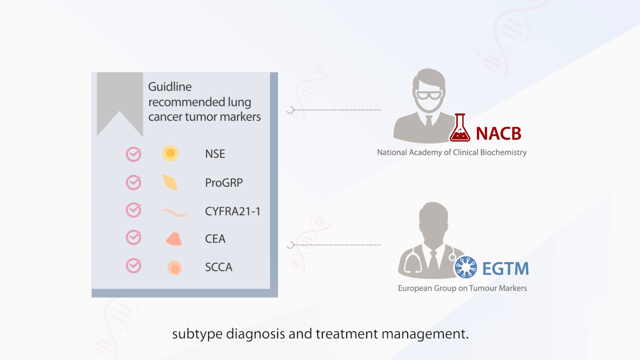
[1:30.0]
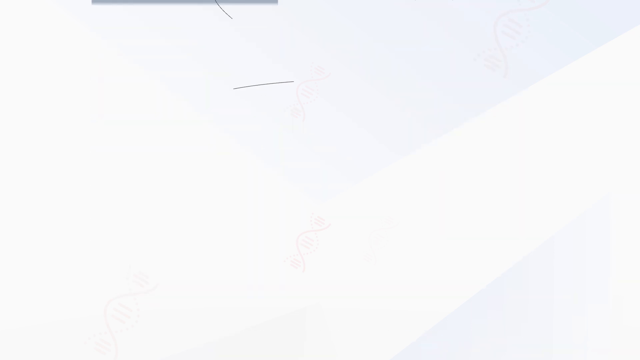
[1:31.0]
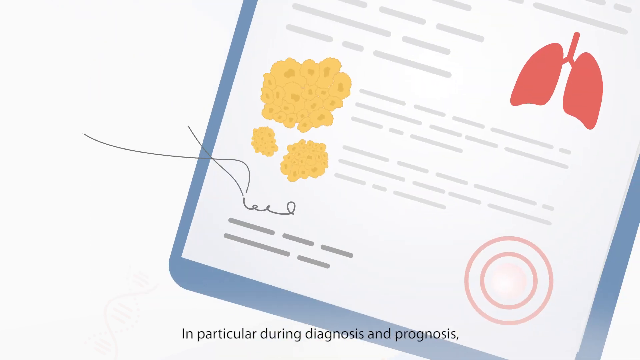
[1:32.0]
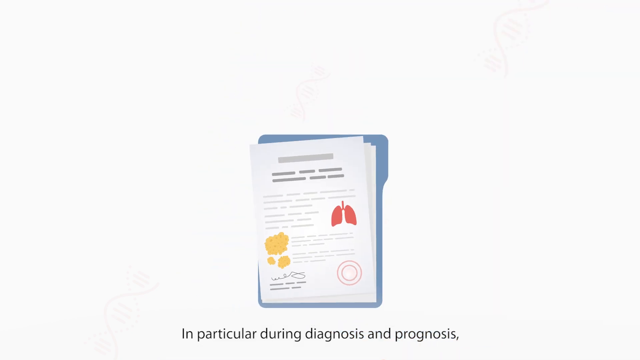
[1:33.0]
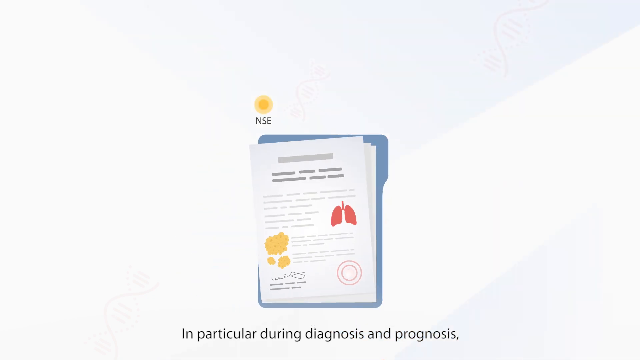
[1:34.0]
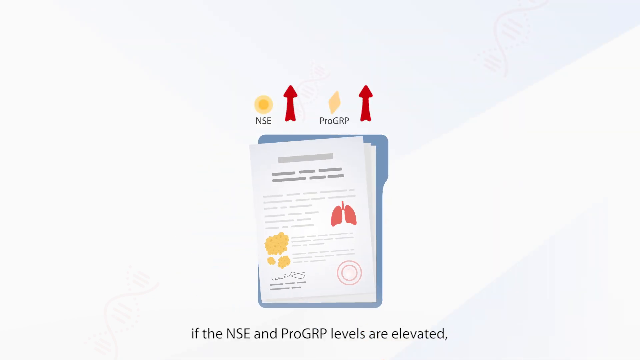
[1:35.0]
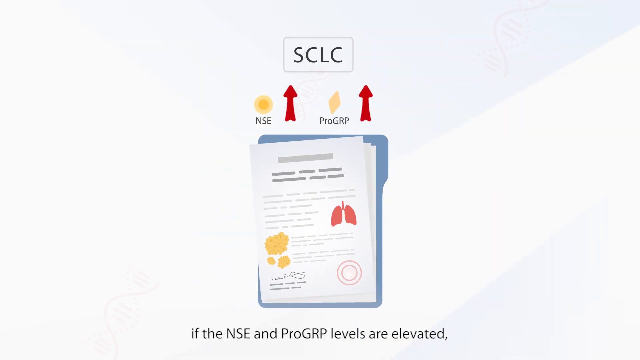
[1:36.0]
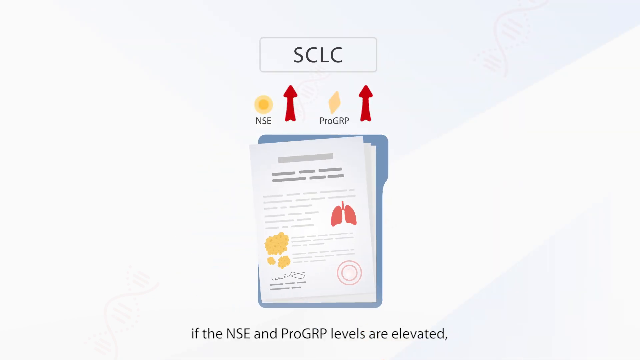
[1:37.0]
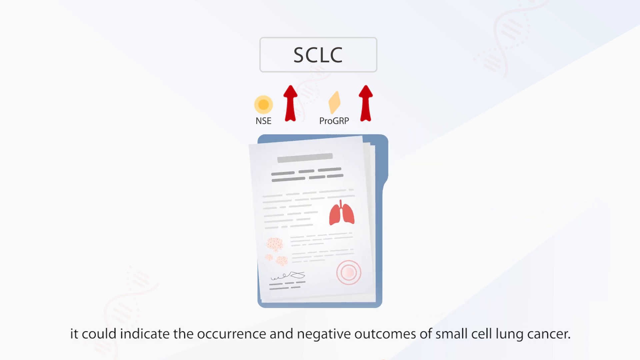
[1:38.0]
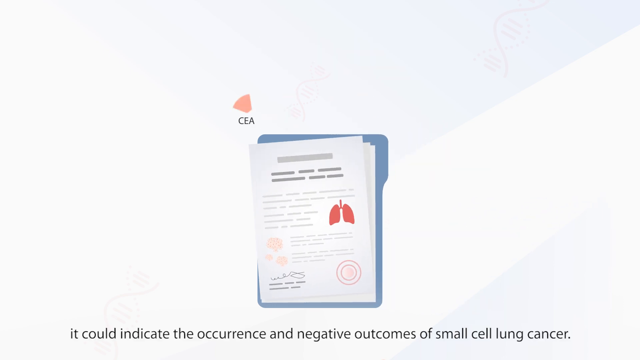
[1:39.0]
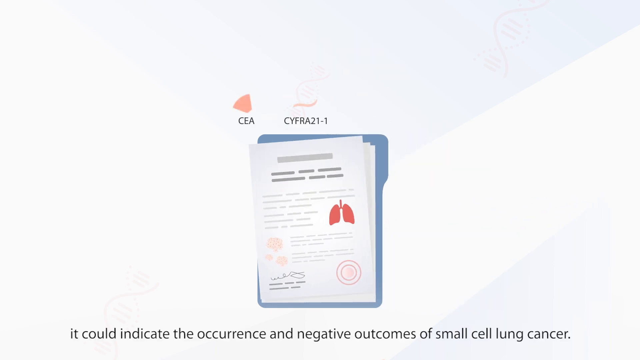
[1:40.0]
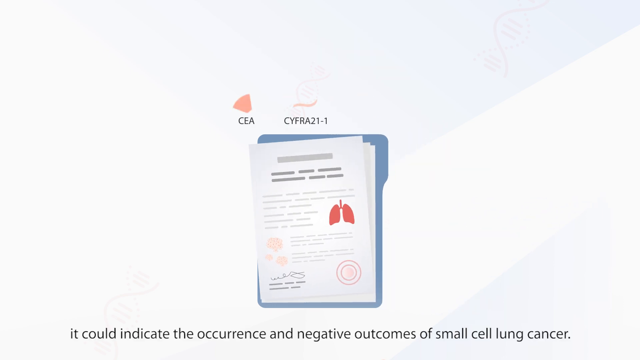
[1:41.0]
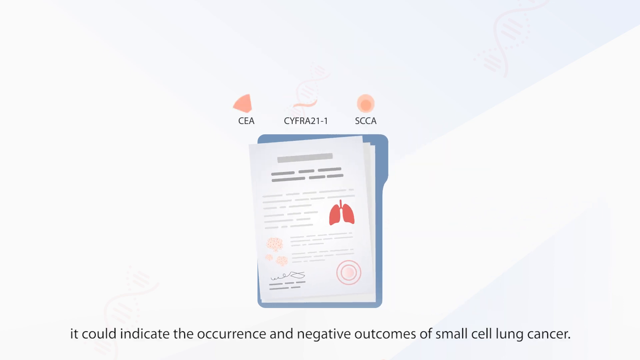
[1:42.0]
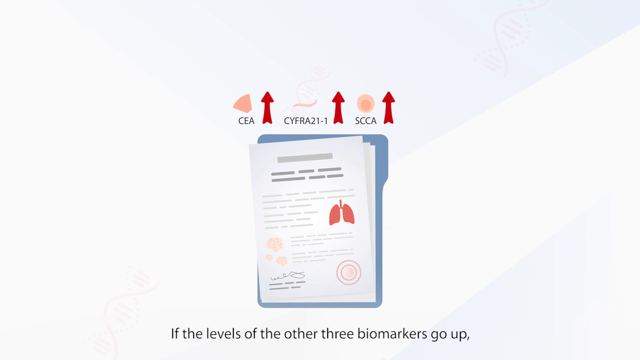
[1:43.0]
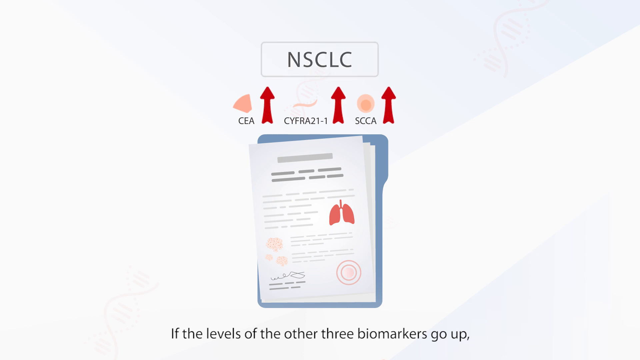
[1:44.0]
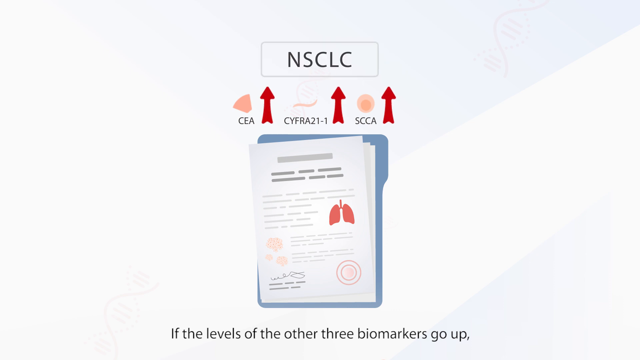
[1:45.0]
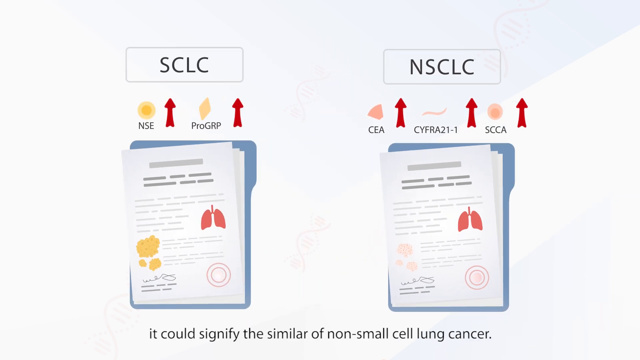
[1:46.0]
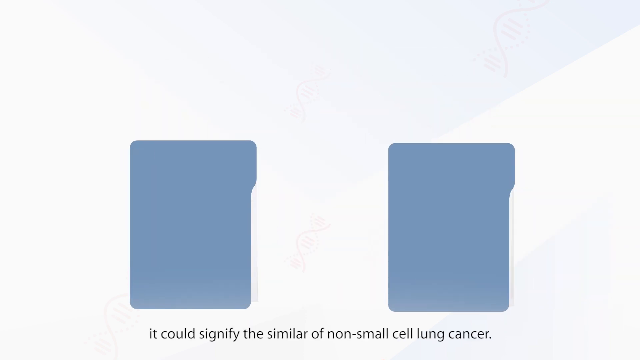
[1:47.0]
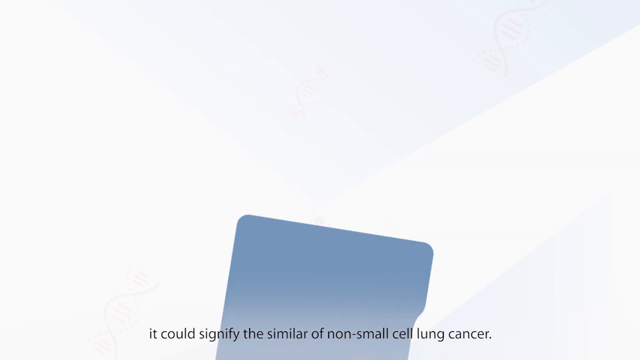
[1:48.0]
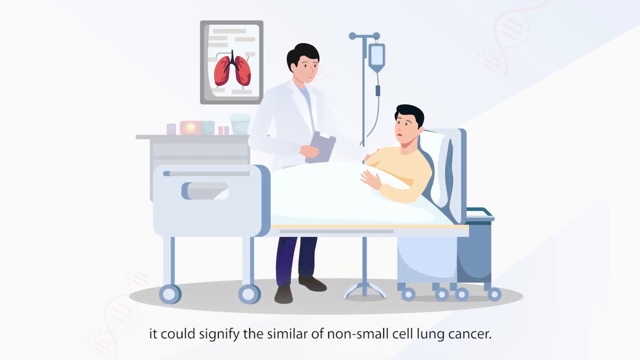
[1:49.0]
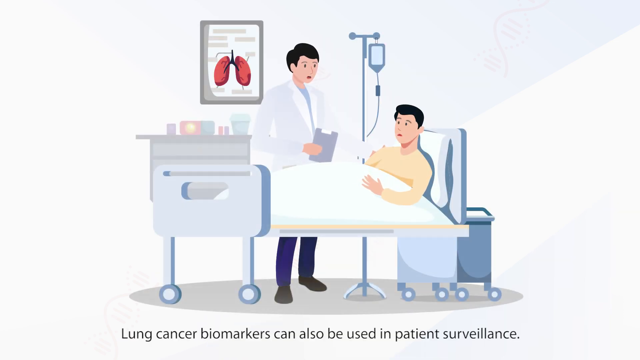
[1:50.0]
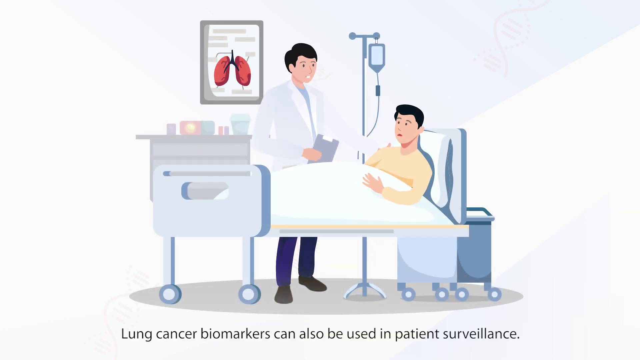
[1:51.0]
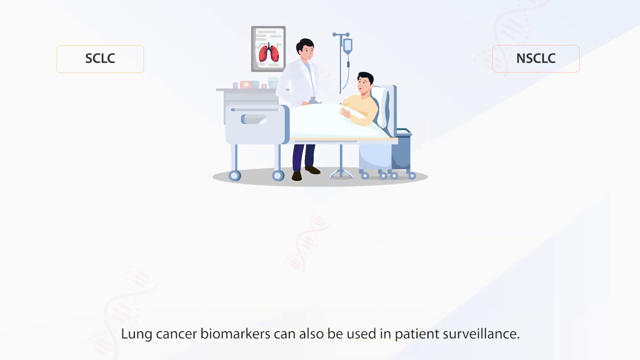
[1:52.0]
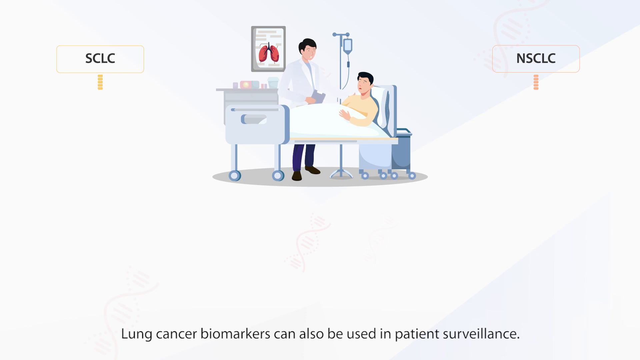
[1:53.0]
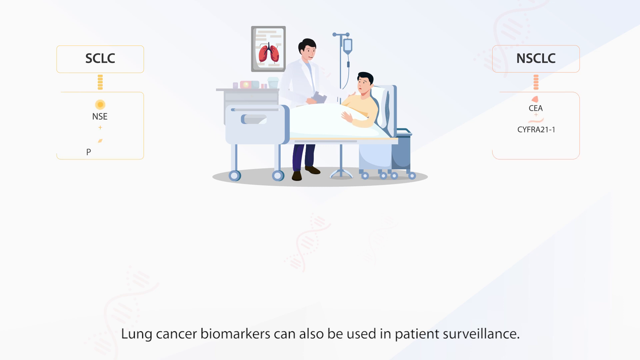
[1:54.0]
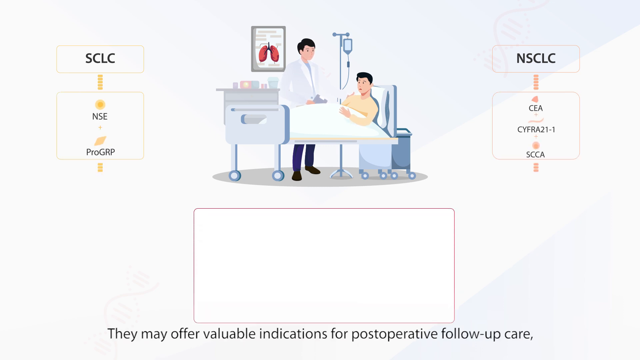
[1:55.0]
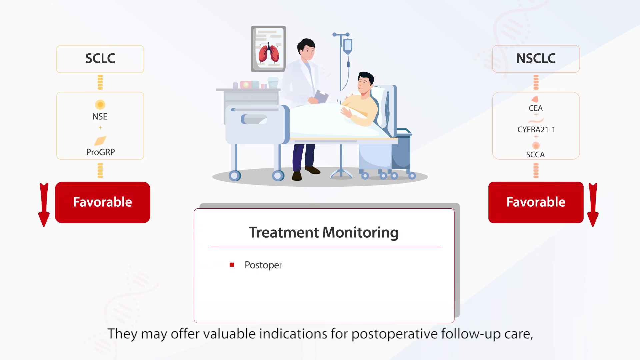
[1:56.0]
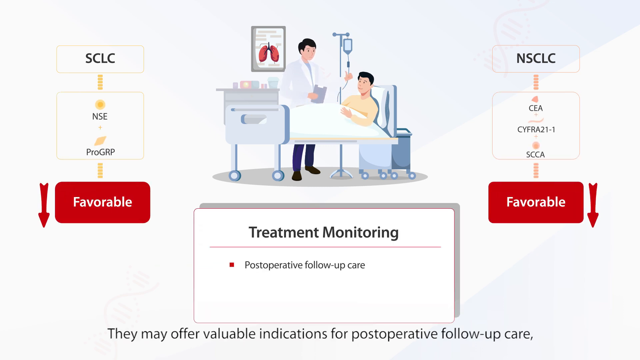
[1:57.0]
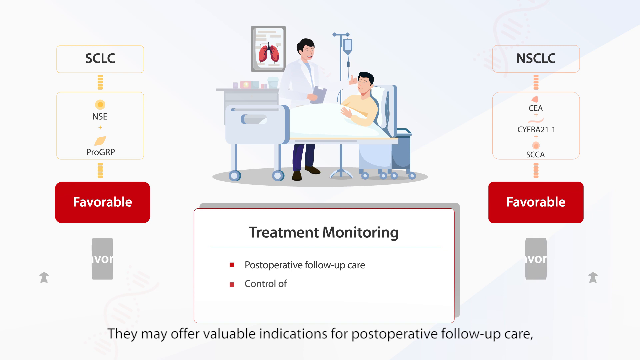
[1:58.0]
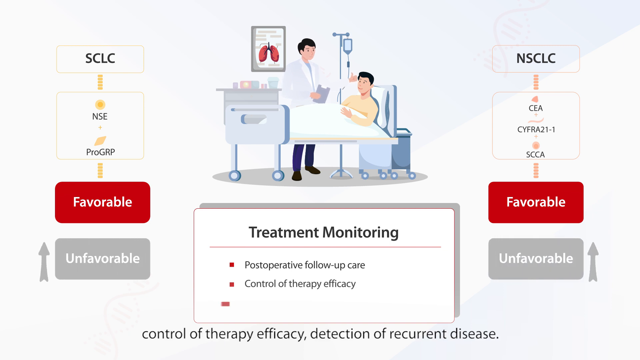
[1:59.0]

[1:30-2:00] In the bottom right corner is the logo for the European Group of Tumour Markers. On the left is a rectangle with a logo resembling a bookmark of some kind at the top, next to text reading "Guidelines Recommended Lung Cancer Tumour Markers". Below are "NSE", "ProGRP", "CYFRA21-1", "CEA" and "SCCA", each with an associated image, and to the left of these images a red circle with a tick for each one. A thin grey line connects the National Academy of Clinical Biochemistry to the table of markers, and the same grey line attaches the European Group of Tumour Markers to the table. The table moves up like a slideshow until it is gone and is replaced by a folder with a piece of paper showing a cartoon lung and a cartoon carcinoma, with a signature at the bottom. Above it are images of NSE and ProGRP, each with a red arrow pointing up, and a box reading "SCLC" appears above the arrows. The folder from behind moves to the right and slides in front of the other folder. CEA, CYFRA21-1 and SCCA appear with three red arrows pointing upwards, and the text "NSCLC" appears flashing above them. The two images separate, small cell carcinoma on the left and non-small cell on the right, showing the differences in the biochemical markers that are increased in these cancer types. The papers on top of the files move to the right and then to the left, sliding into the files, both at the same time. A cartoon hand reaches up from the bottom of the image and pulls the image down off the screen.